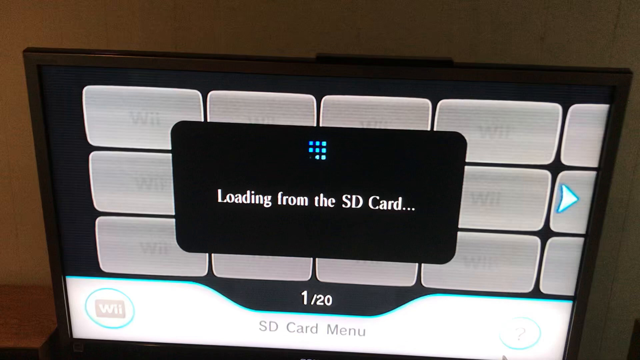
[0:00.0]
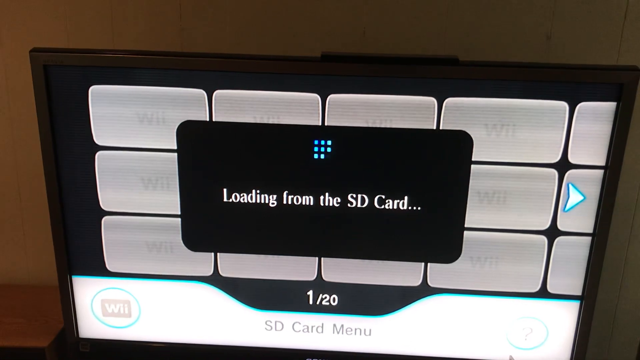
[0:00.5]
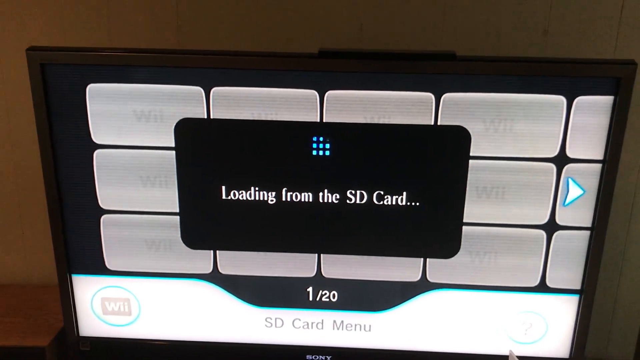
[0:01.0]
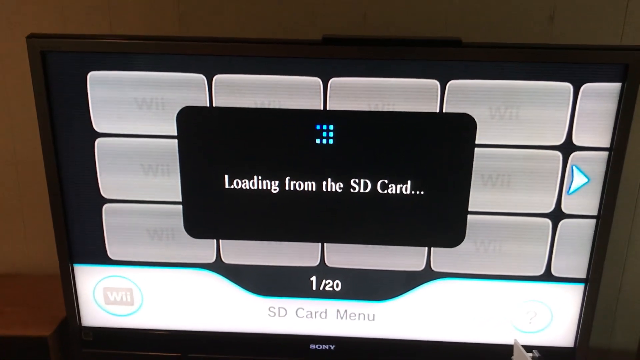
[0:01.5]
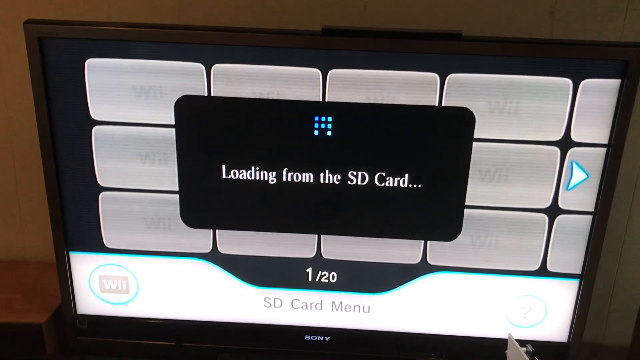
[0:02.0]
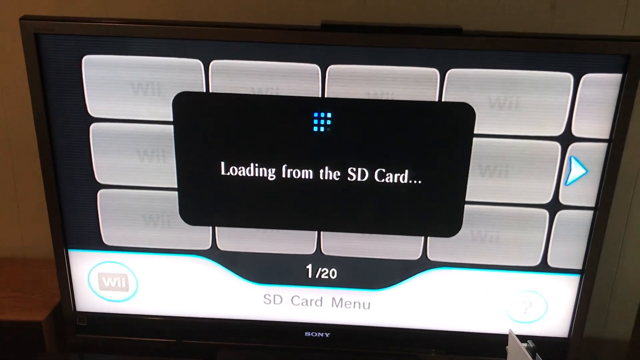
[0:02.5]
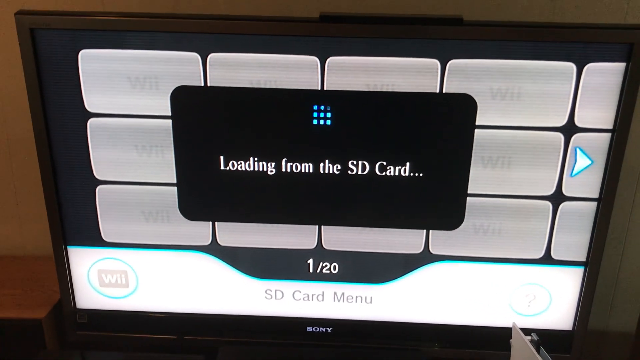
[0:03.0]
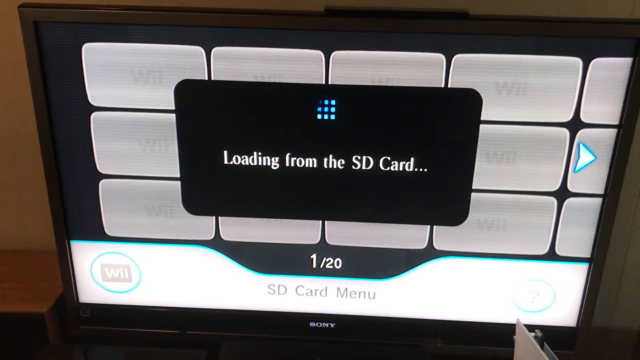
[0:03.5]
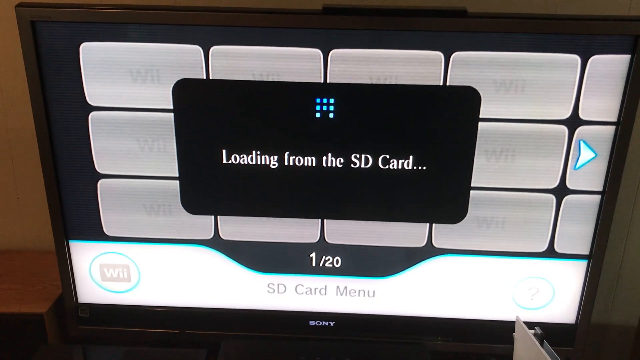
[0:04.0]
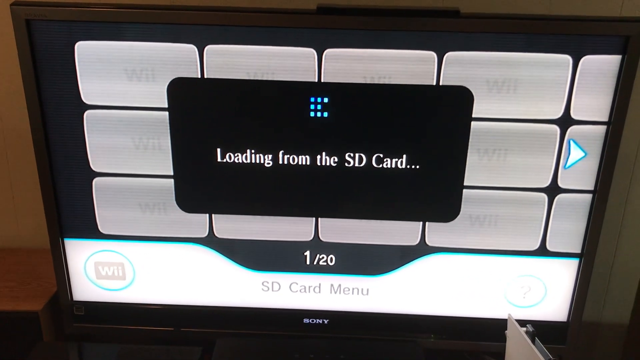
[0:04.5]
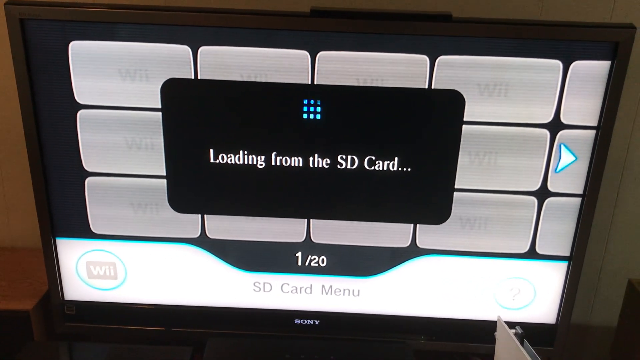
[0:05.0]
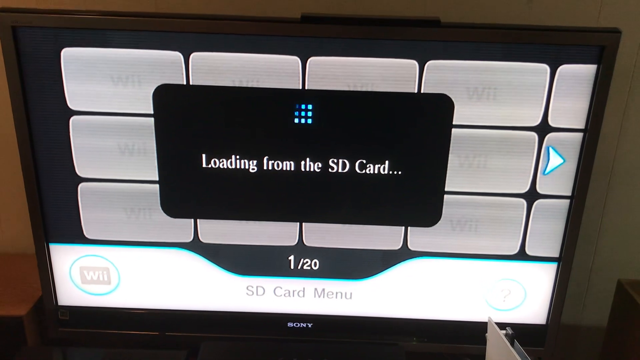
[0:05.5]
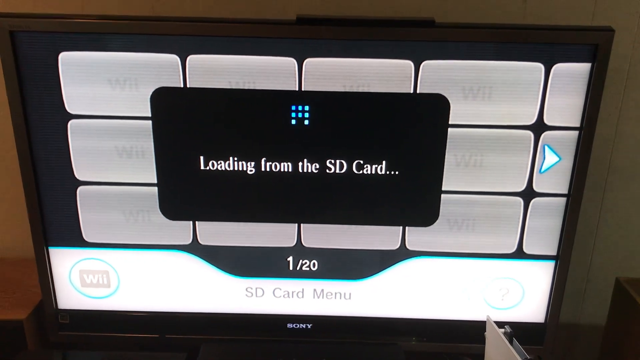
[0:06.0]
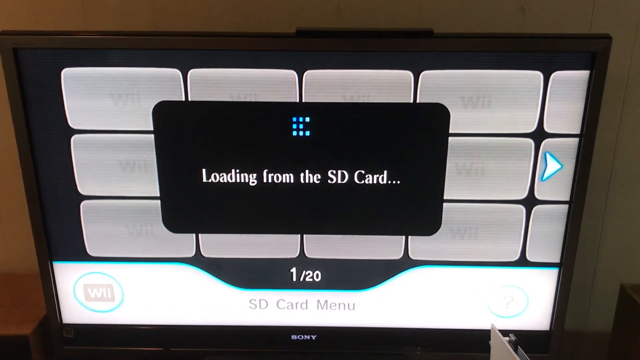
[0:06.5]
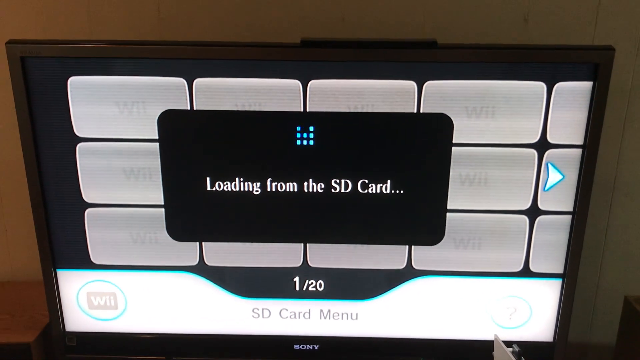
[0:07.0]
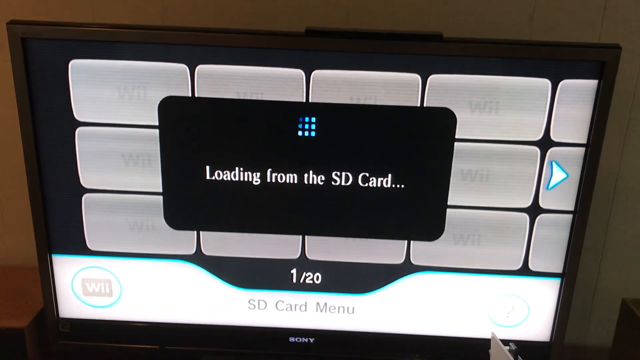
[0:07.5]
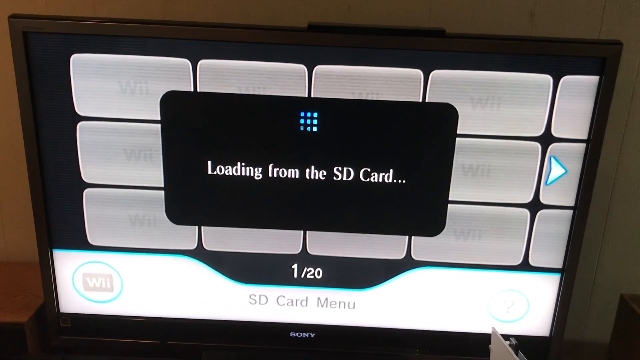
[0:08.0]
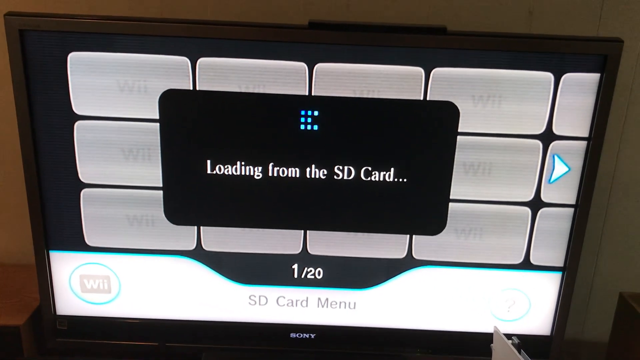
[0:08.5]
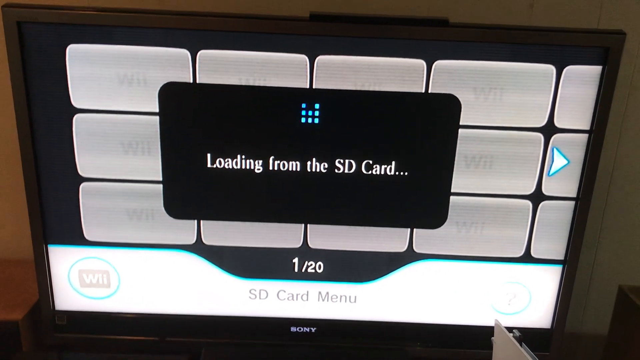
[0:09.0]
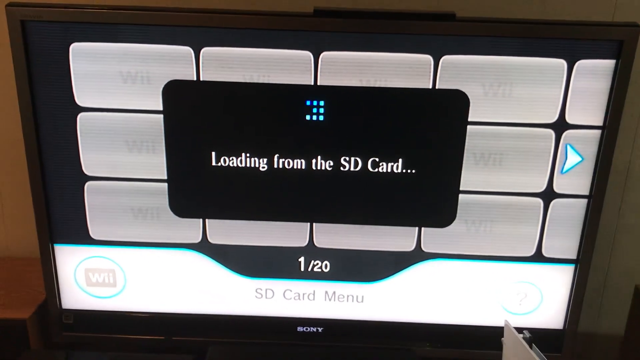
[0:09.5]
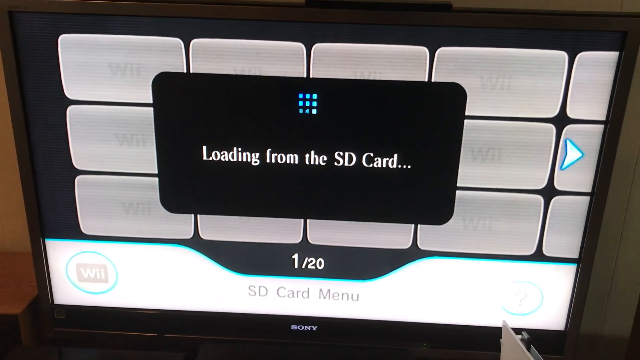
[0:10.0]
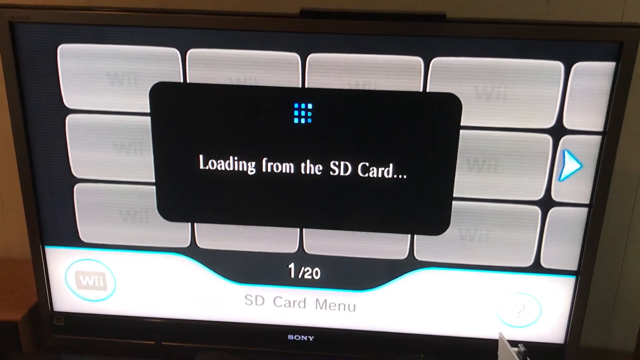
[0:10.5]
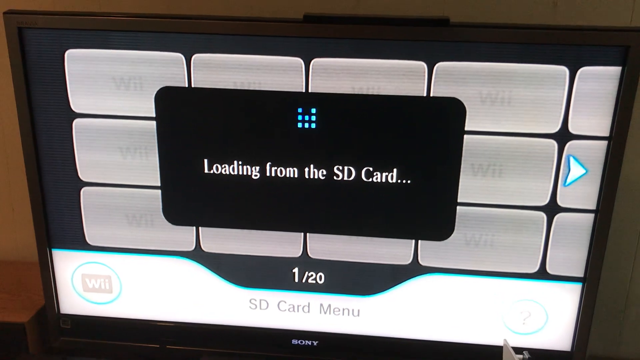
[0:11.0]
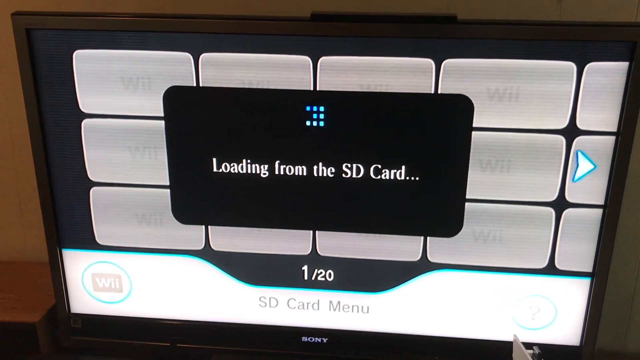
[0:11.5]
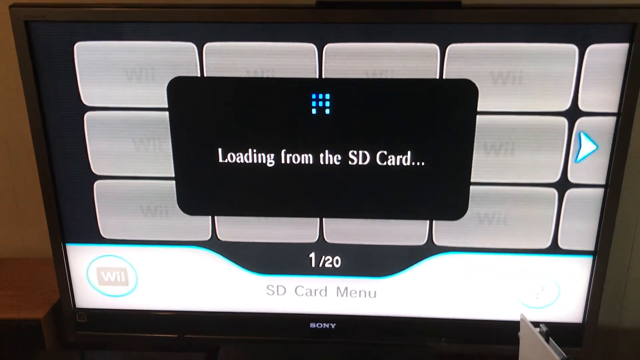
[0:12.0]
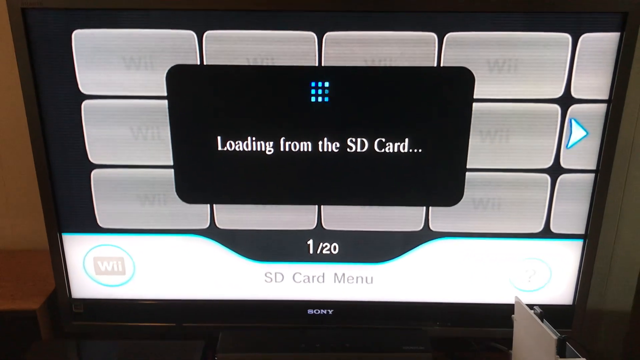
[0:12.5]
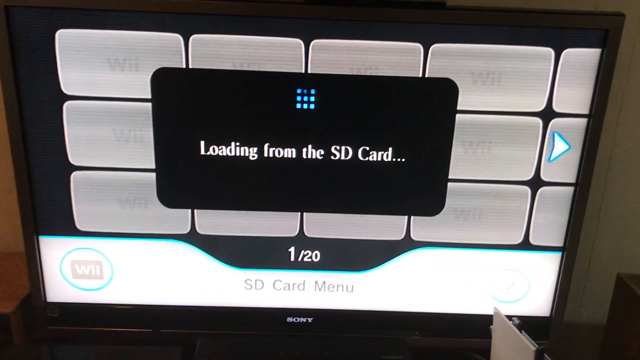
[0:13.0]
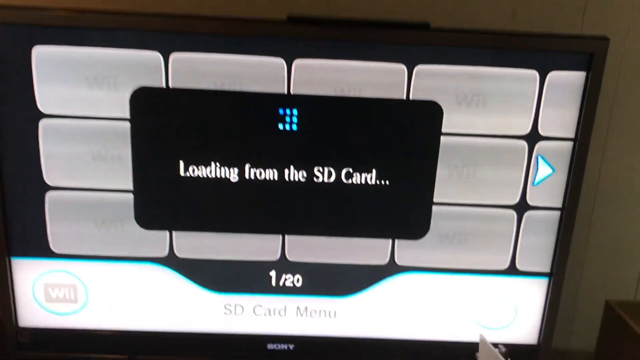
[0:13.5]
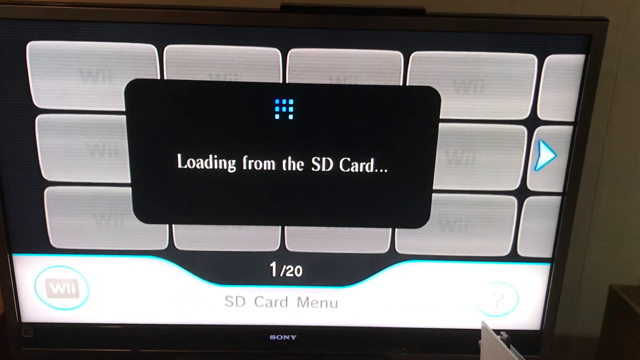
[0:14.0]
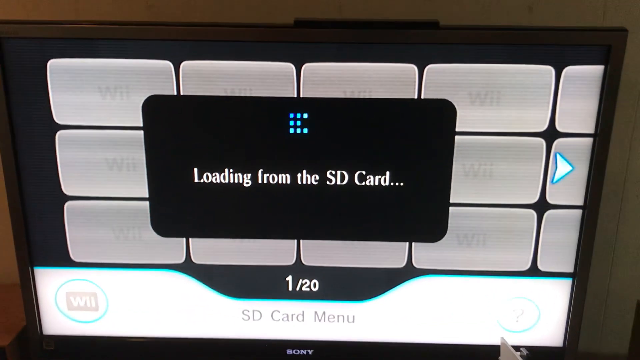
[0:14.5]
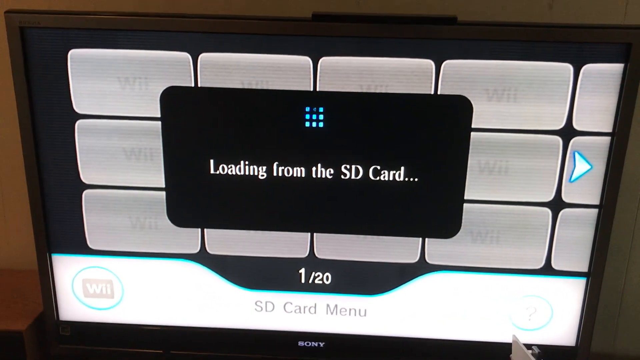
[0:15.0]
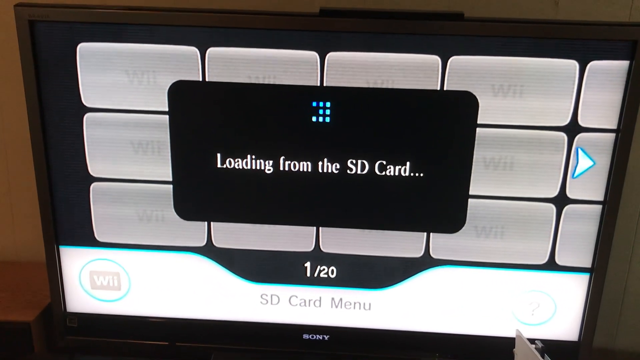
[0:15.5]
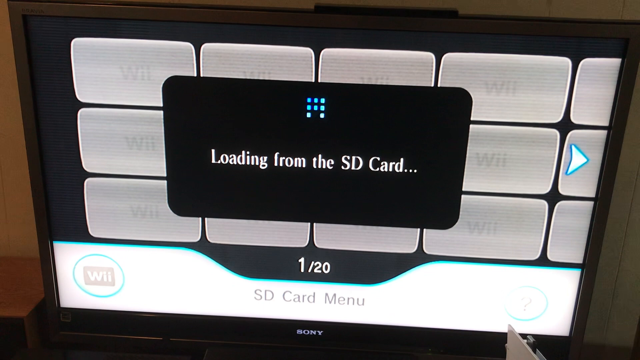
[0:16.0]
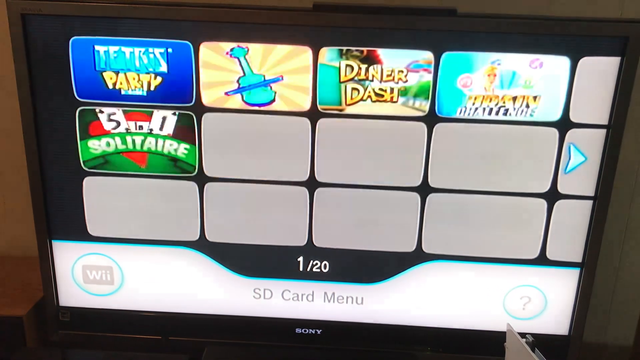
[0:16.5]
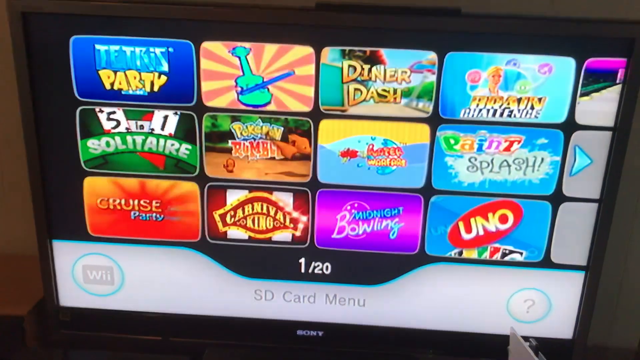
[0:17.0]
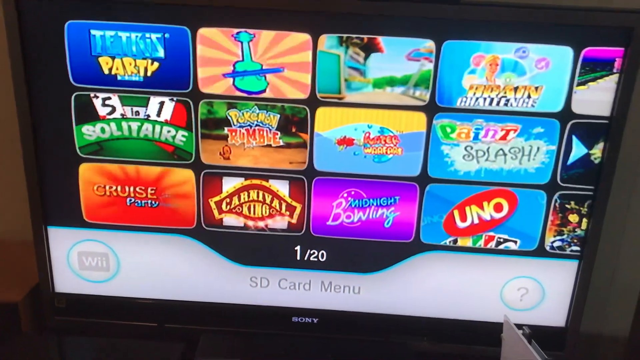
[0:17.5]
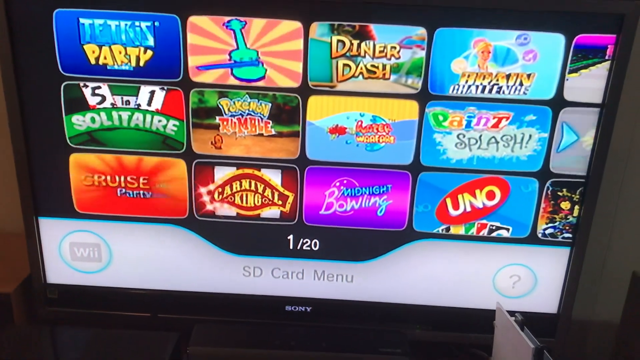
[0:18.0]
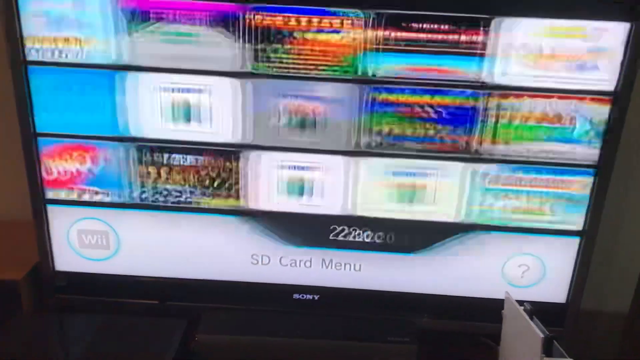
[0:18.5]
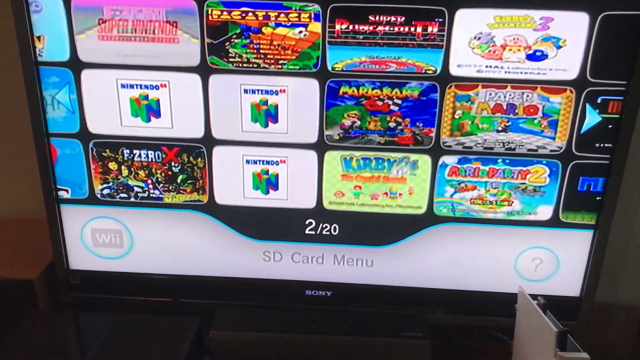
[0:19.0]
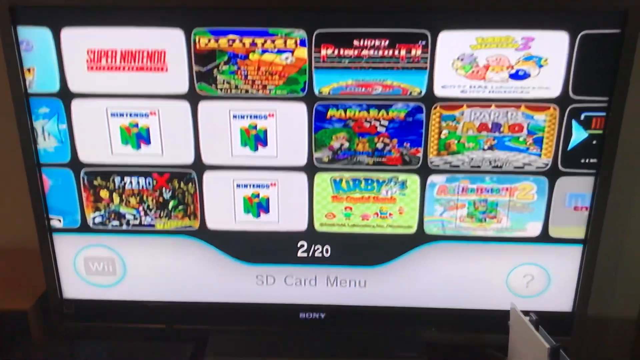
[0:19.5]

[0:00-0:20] A screen appears to read "loading from an SD card," like a computer-type screen, and shows "1/20 SD card menu." To the right of that is a small white arrow, as if it could be pushed. Multiple blue dots run around, indicating that the computer is thinking. Very brightly colored objects then pop up into white squares, apparently multiple games that could be played. There are 15 small square screens per screen, including Solitaire, Doltar Dash and what looks like Zero X. There is a lot of movement in these small pop-ups. The first screen flashes very fast, and it looks like someone has pointed to move to the next screen. UNO is among the games. At the bottom of the white screen it says "Sony," the name of the computer. The bottom portion looks like a laptop, with some of the keys visible.